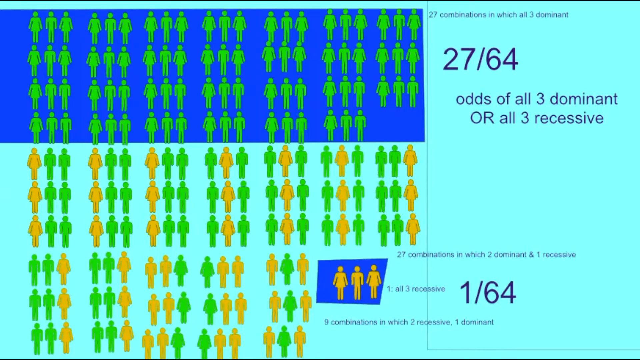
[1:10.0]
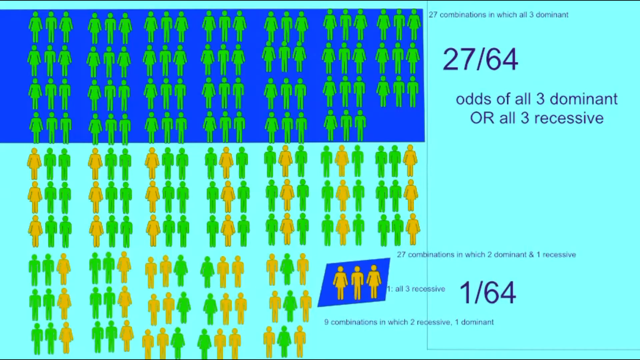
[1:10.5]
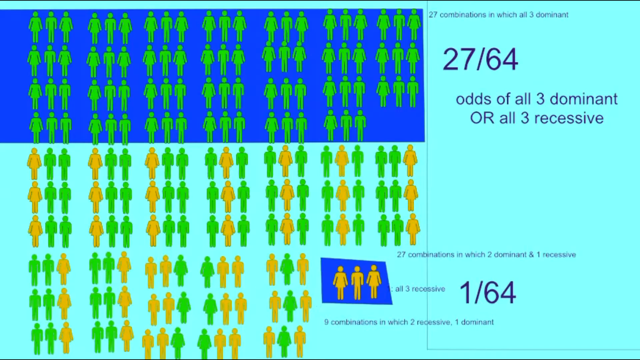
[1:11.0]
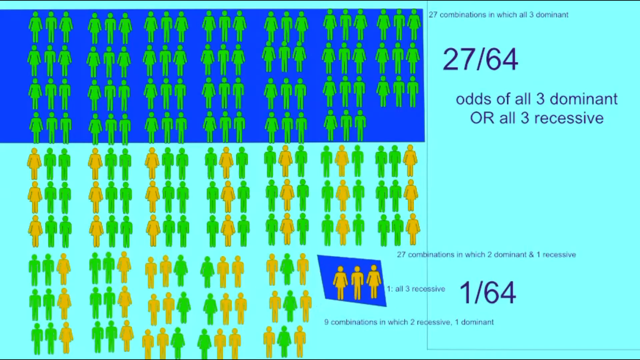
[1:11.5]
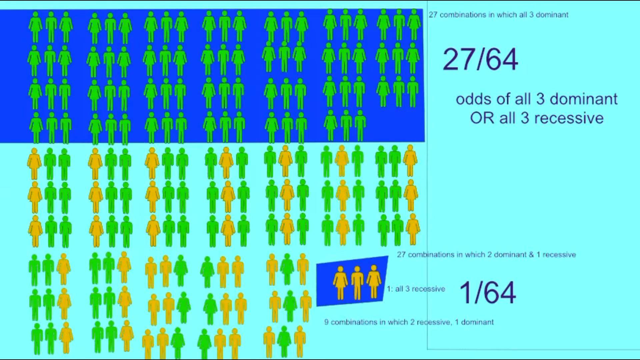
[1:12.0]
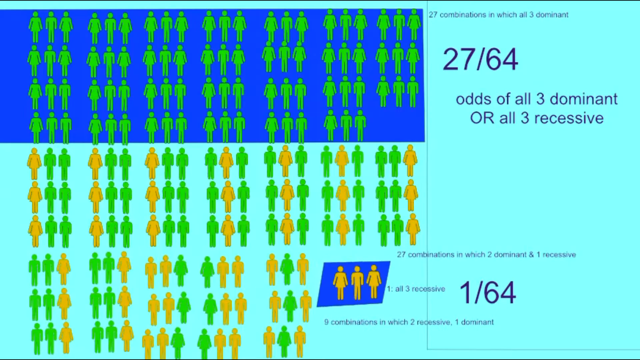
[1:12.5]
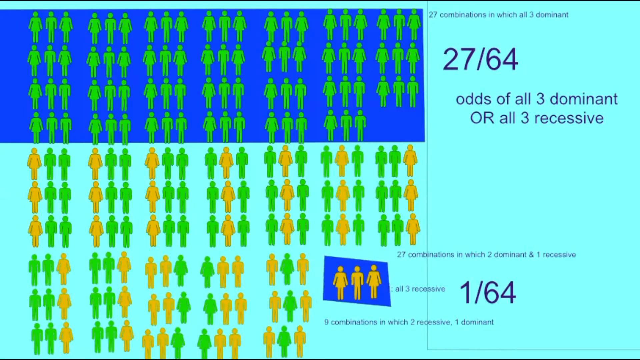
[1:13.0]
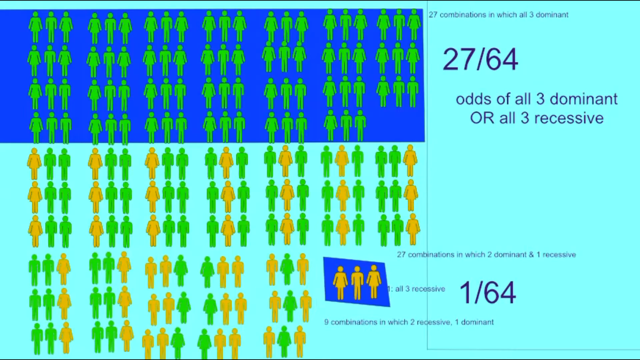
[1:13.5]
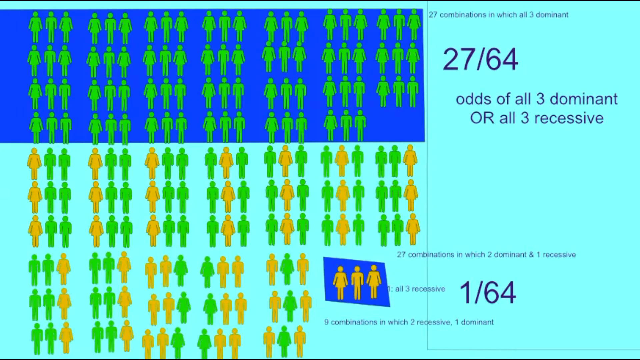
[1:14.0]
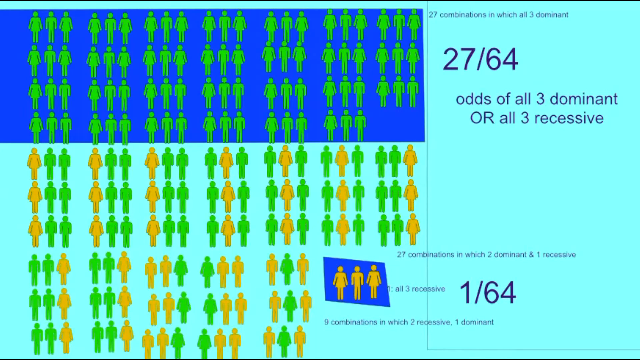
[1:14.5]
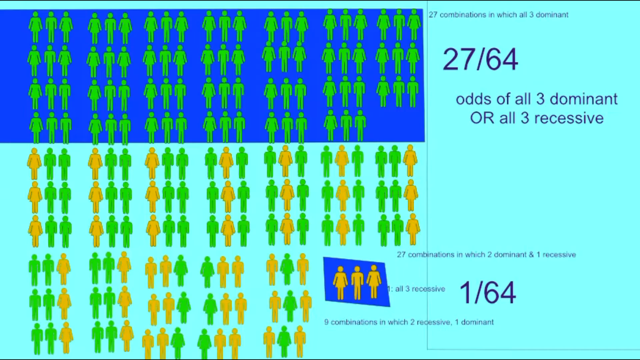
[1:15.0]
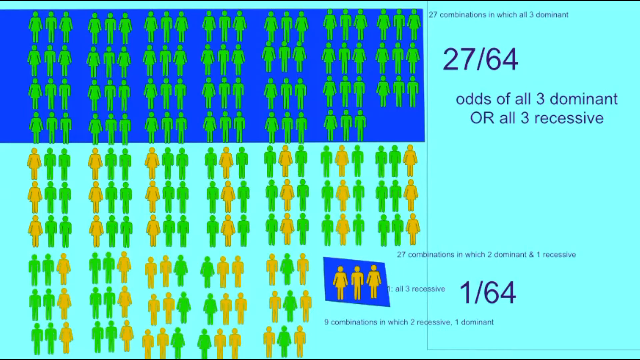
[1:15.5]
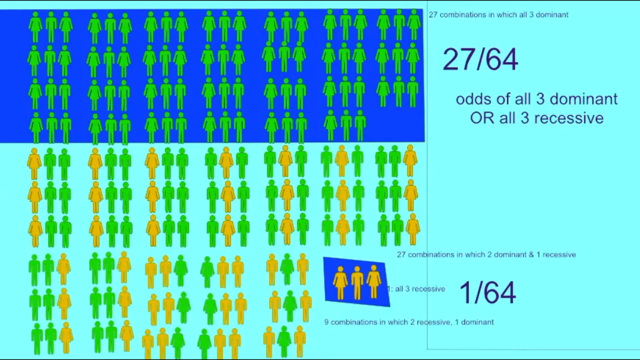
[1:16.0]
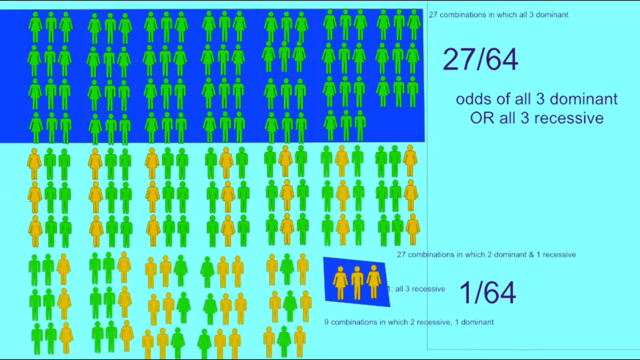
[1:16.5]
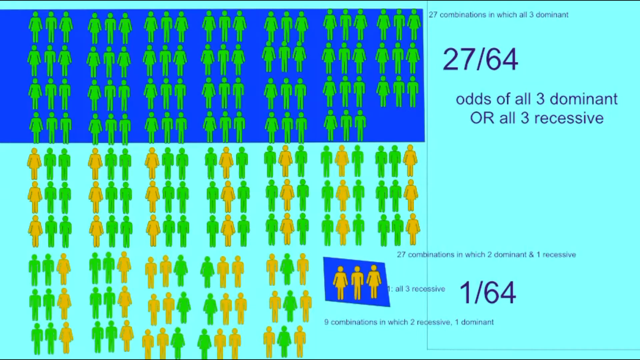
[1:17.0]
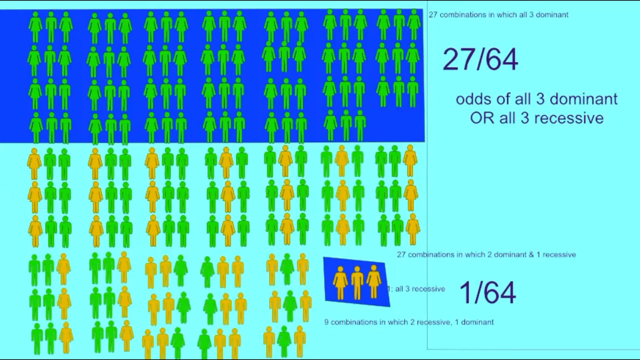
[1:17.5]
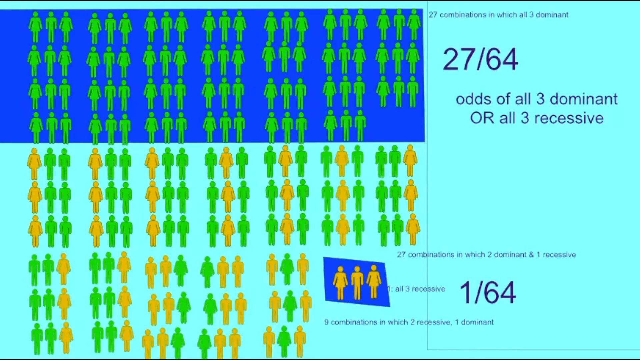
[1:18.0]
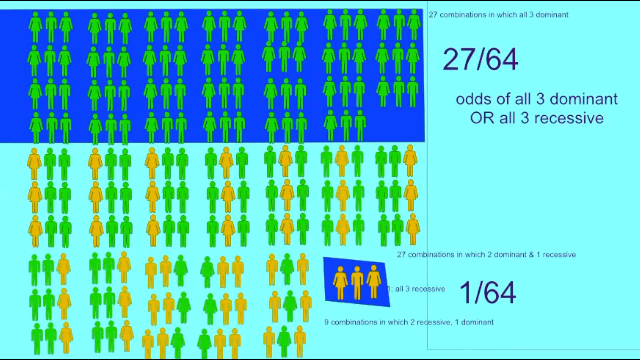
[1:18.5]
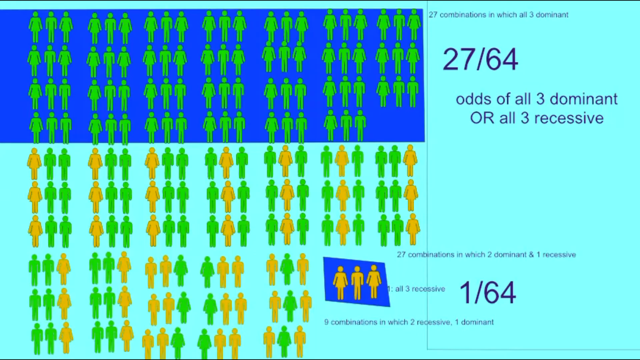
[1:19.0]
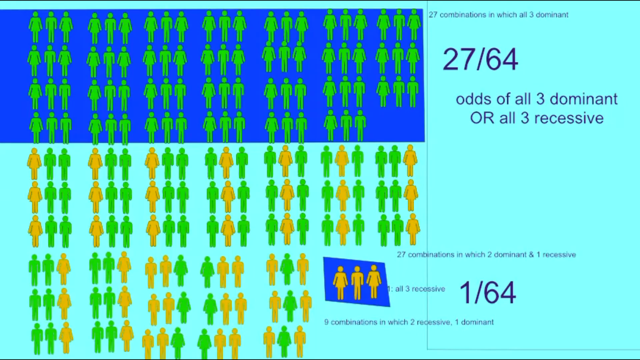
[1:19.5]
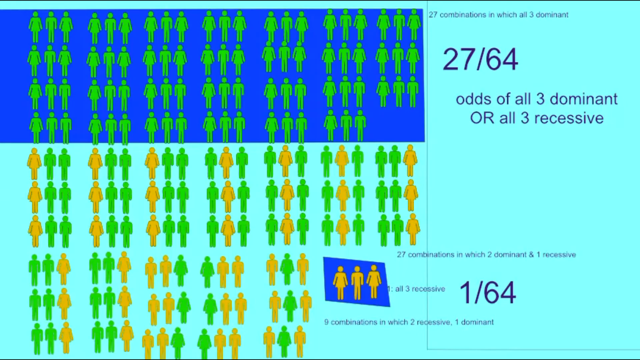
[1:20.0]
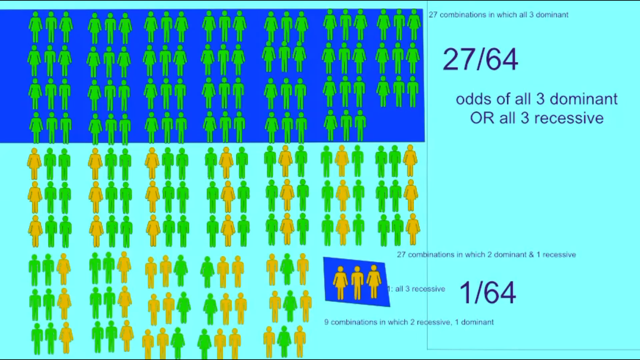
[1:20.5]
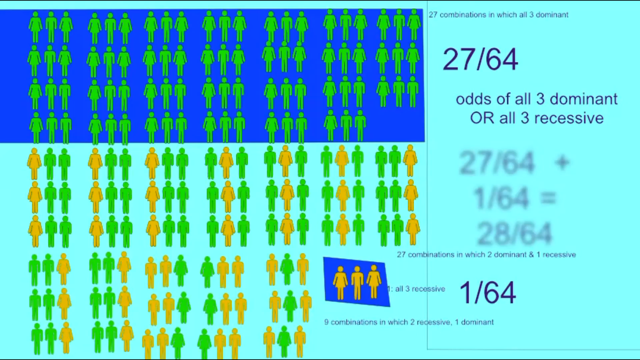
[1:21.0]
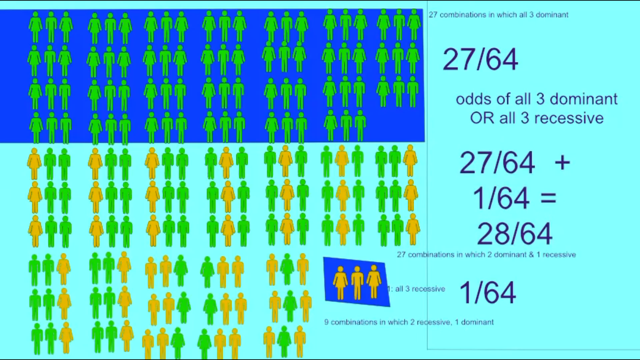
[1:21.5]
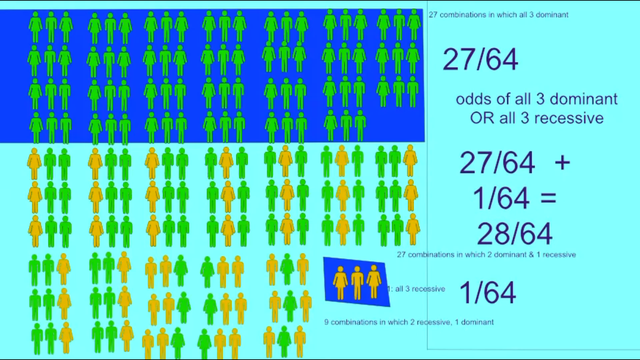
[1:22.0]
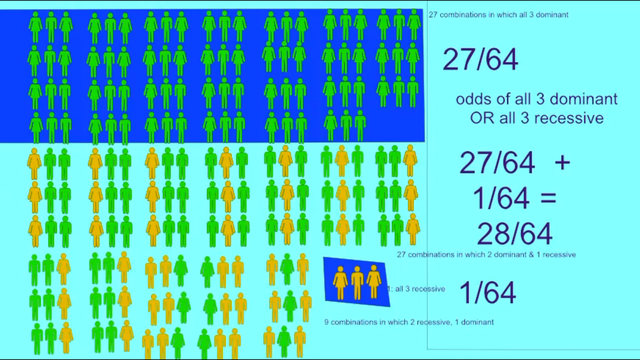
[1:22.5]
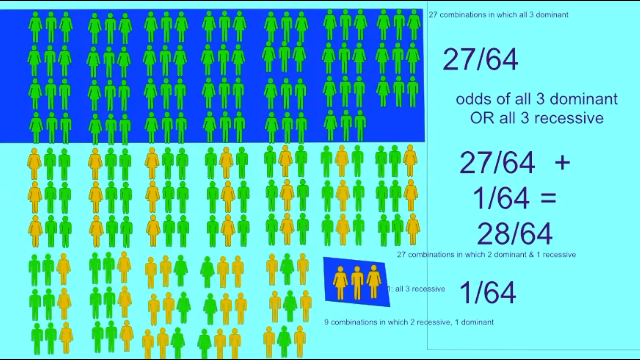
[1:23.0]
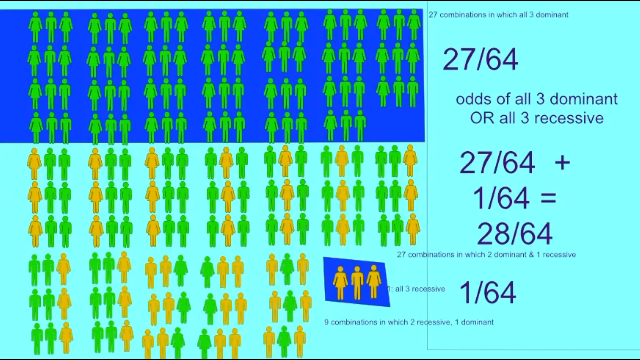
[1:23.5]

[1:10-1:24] Sharp blue highlighting marks 1 out of 64 for all three recessive and 27 out of 64 for all three dominant. The video ends with the sum 27 out of 64 plus 1 out of 64 equals 28 out of 64, the total odds of either fully dominant or fully recessive out of all 64 combinations.